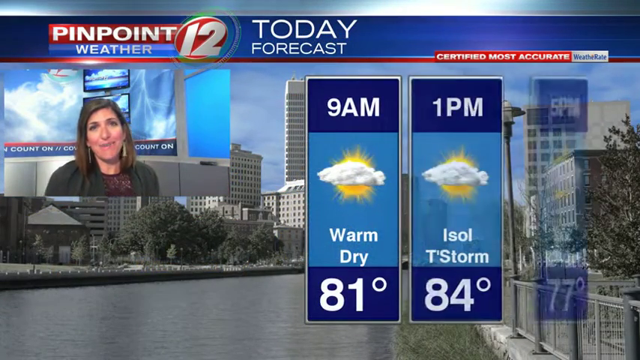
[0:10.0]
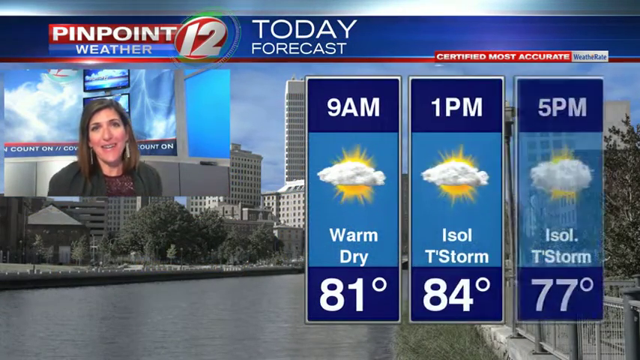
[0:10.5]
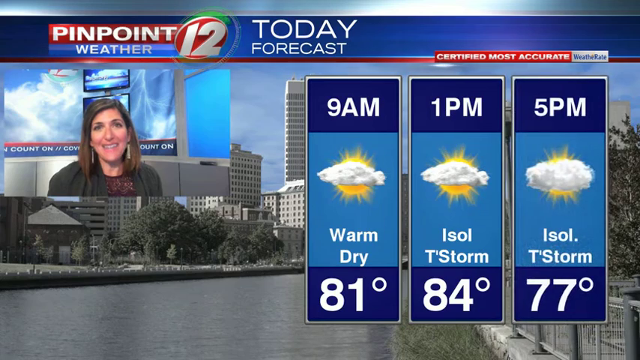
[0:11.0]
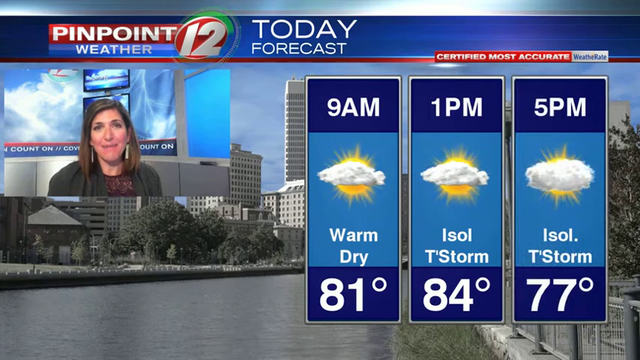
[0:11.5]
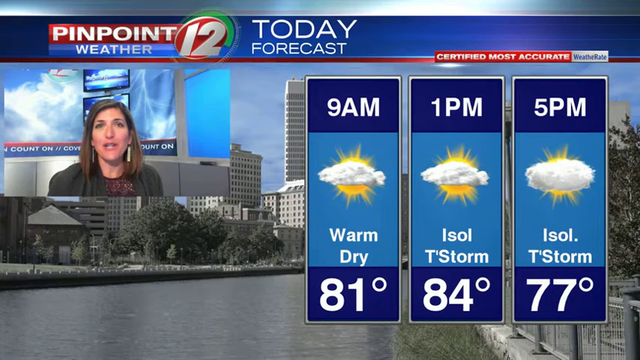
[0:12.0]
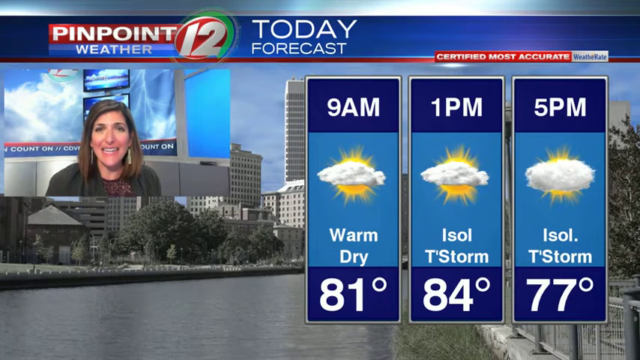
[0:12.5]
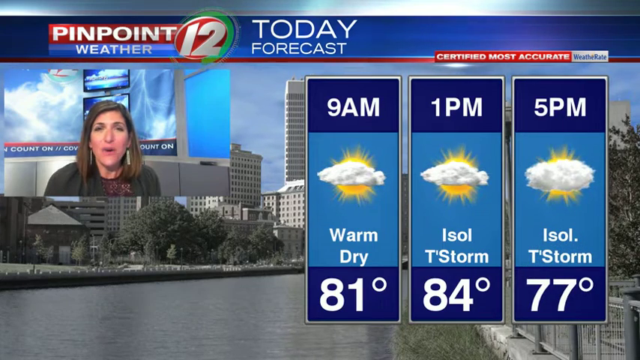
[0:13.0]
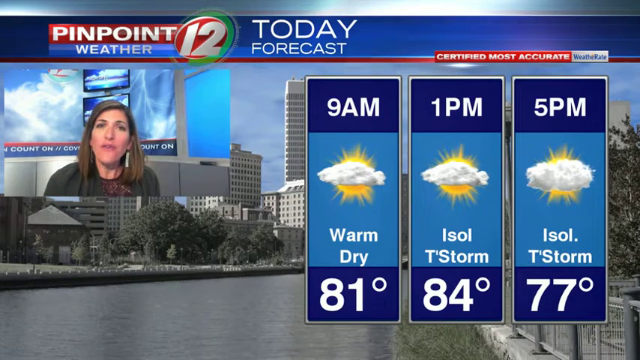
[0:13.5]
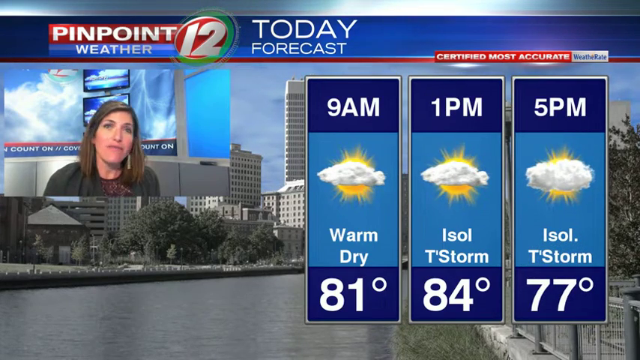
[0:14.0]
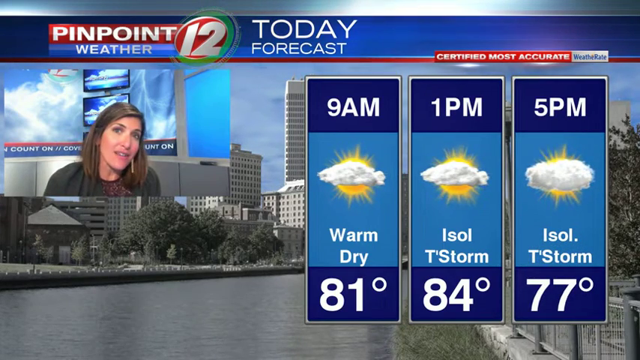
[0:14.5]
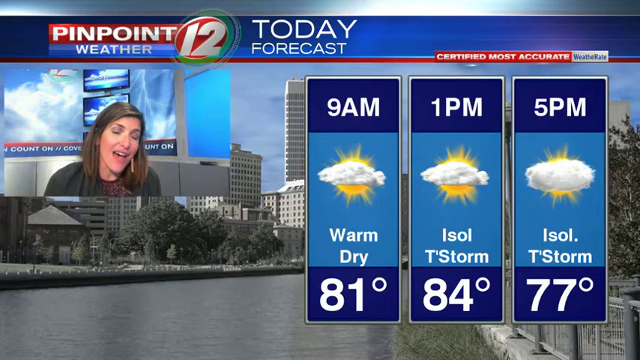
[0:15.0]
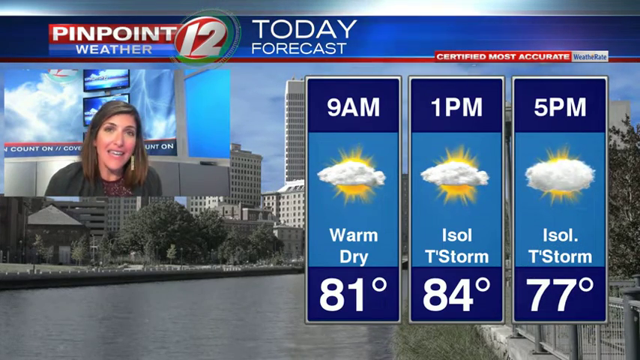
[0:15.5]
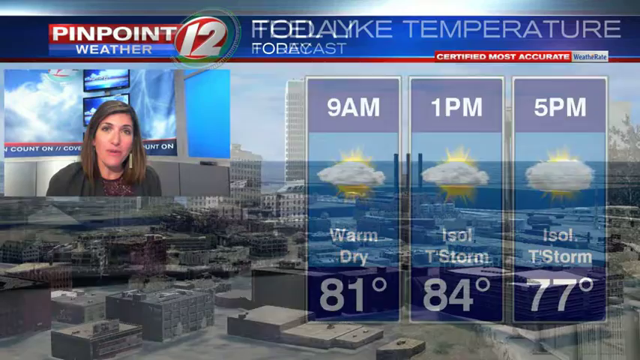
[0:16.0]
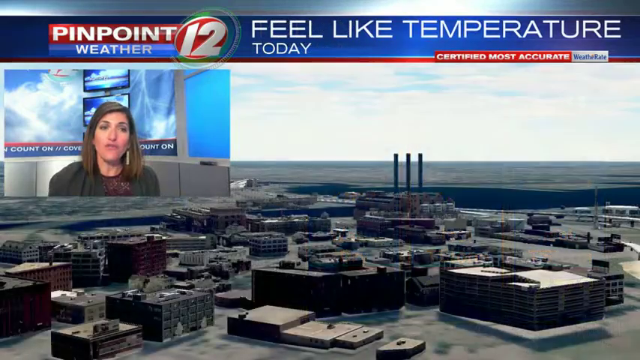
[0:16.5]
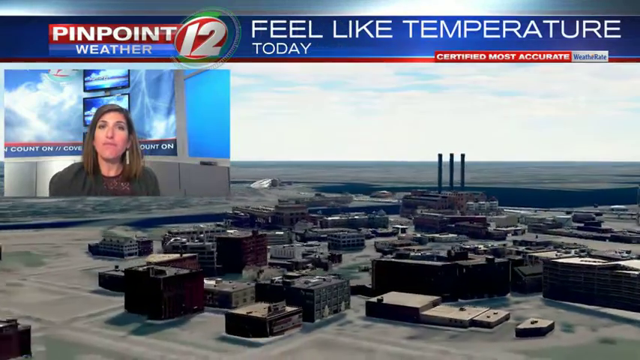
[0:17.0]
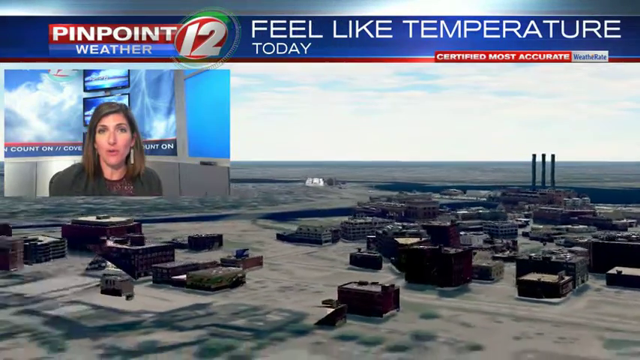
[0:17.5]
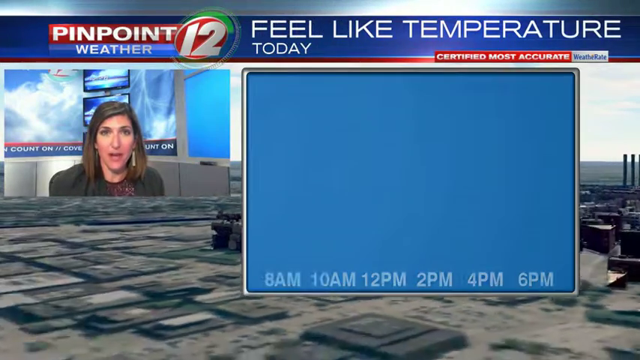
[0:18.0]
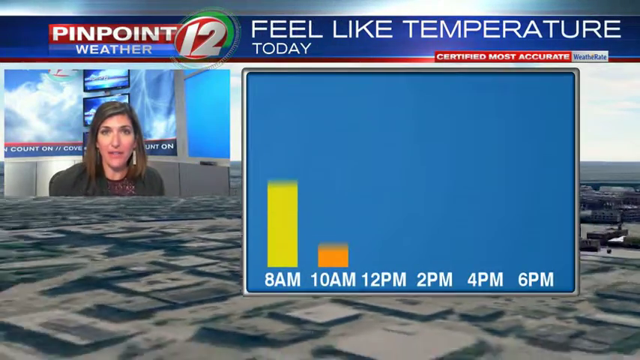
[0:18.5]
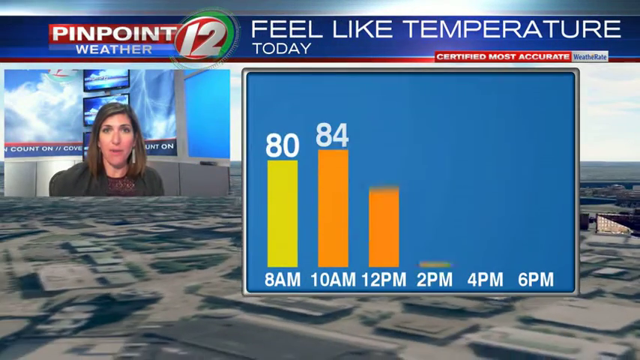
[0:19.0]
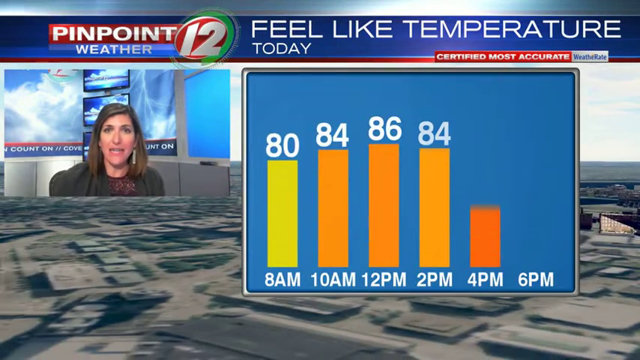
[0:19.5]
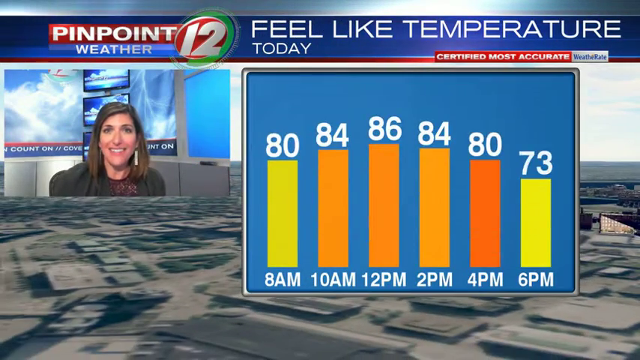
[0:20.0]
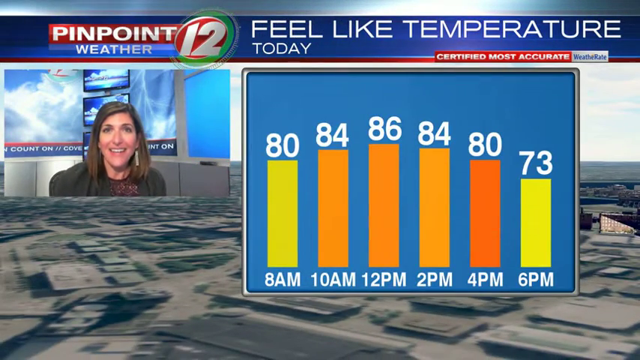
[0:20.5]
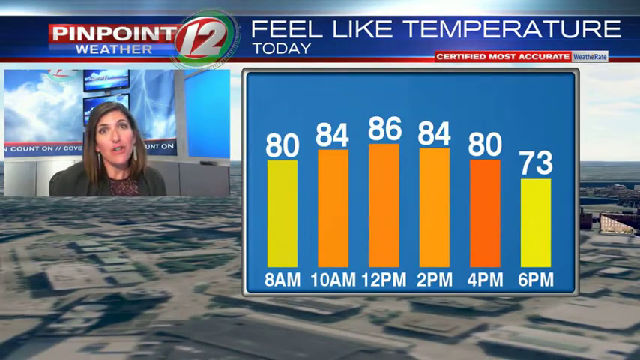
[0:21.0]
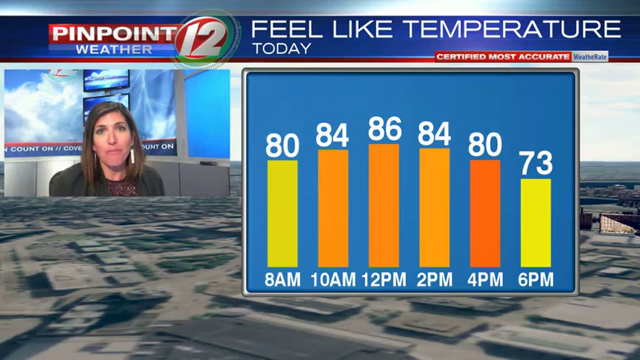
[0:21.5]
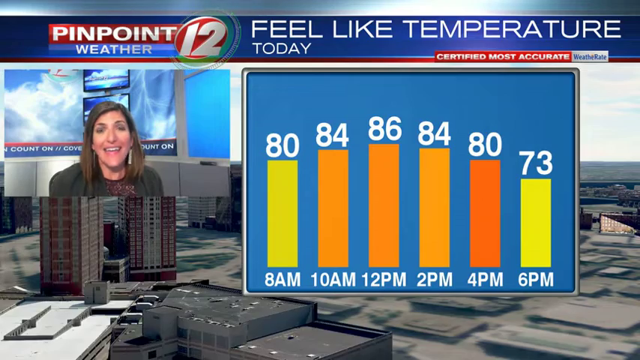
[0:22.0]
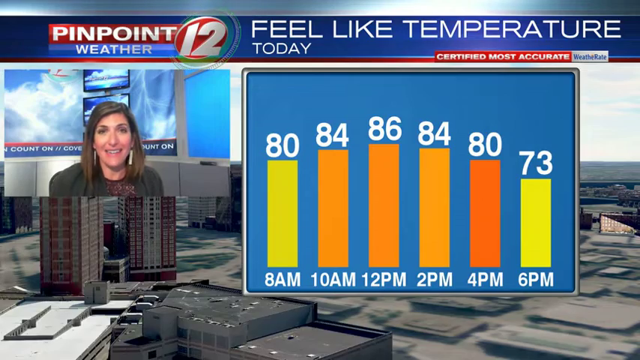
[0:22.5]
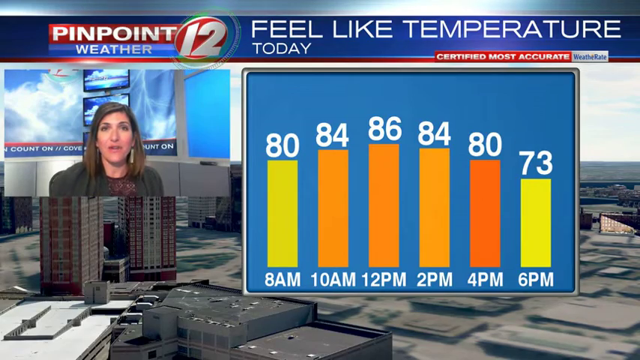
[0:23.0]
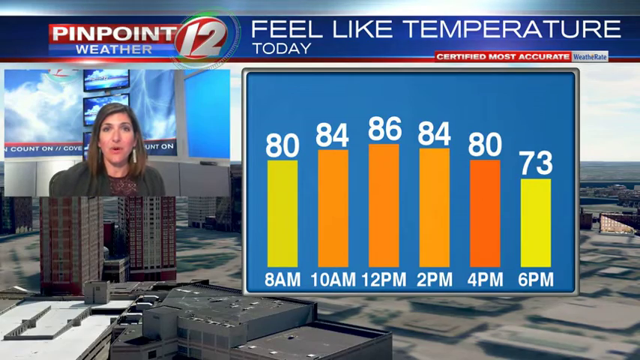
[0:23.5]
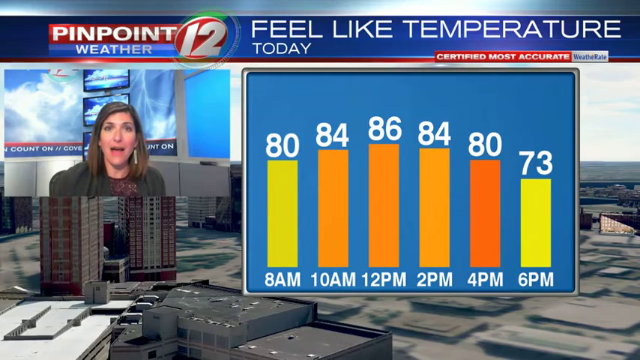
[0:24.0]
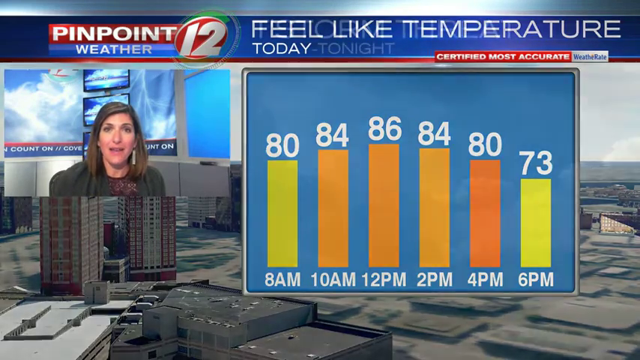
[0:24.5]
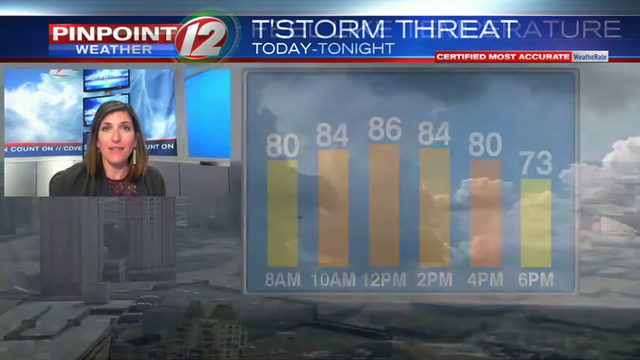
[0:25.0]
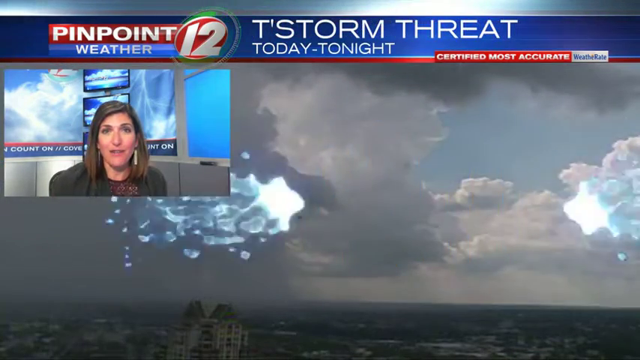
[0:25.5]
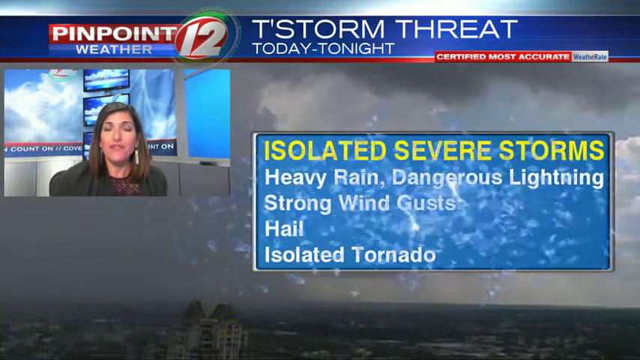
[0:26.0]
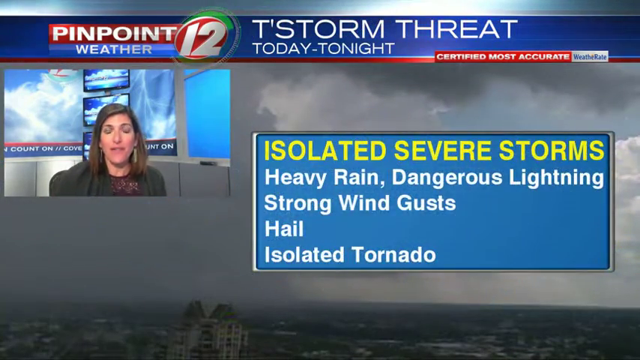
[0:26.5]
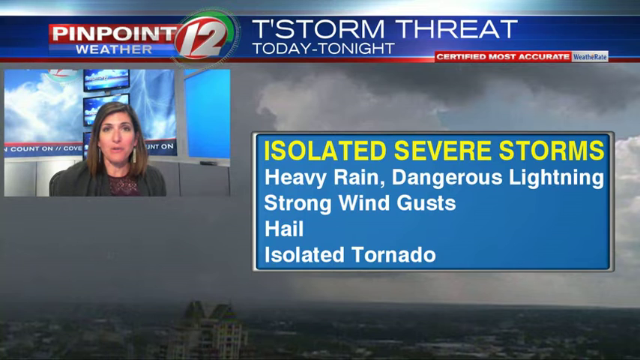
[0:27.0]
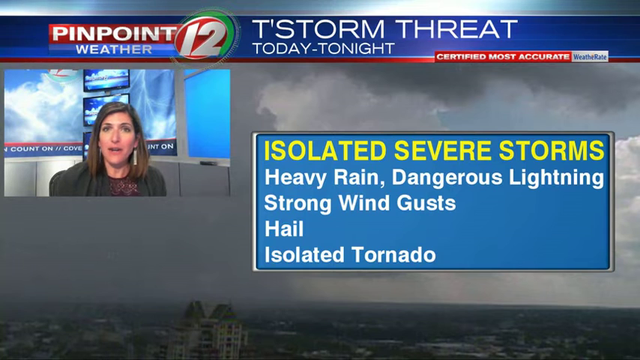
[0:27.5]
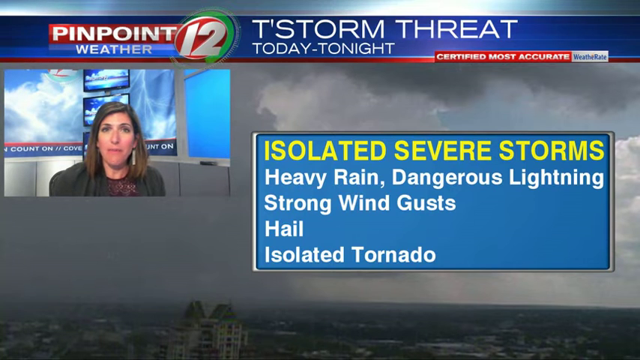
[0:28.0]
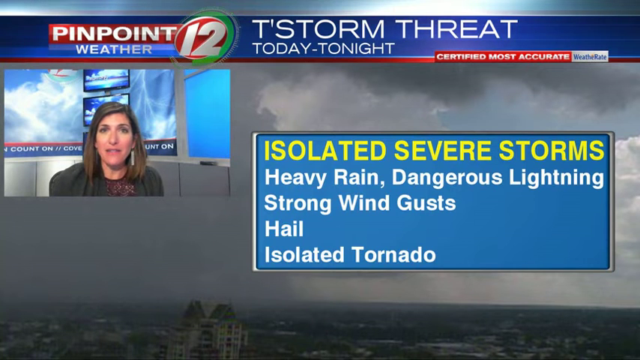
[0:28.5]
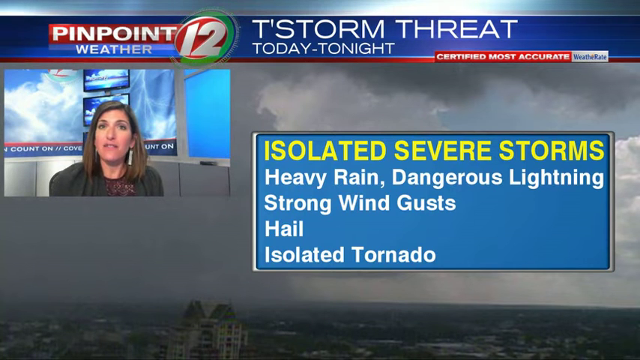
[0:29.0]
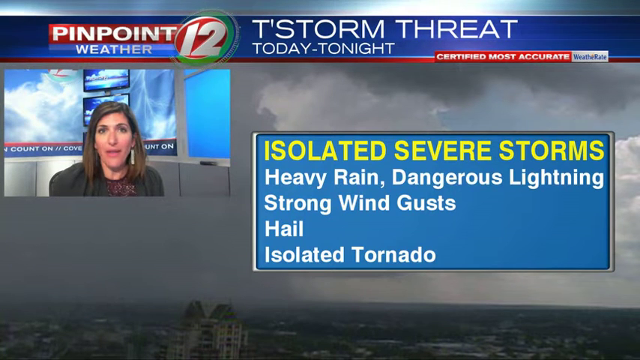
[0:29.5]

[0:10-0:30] The Pinpoint 12 weather segment shows today's forecast. The frame of the lady in the newsroom, apparently the meteorologist, is still in the top left. The backdrop is a cityscape that looks like a live image, with buildings and a road. At 9 AM it will be warm and dry at 71 degrees, with a picture of a sun and a cloud. At 1 PM there is an isolated t-storm at 74 degrees, with a picture of a sun and some clouds. At 5 PM there is an isolated t-storm, with only a tiny bit of the sun visible at the top and bottom while a cloud covers its middle, and it shows 75 degrees, 77 degrees. The lady is talking. Another view then appears, reading "feel like temperature today": 8 AM 80, 10 AM 84, 12 PM 86, 2 PM 84, 4 PM 80 and 6 PM 73.